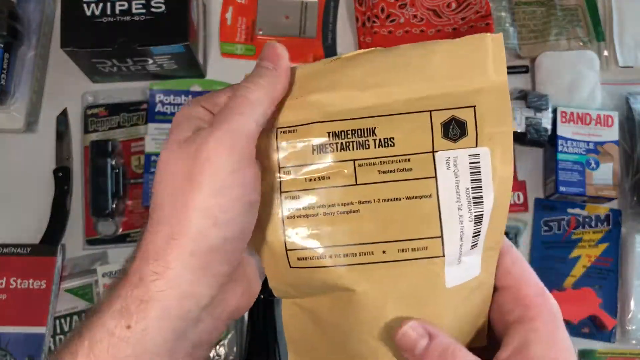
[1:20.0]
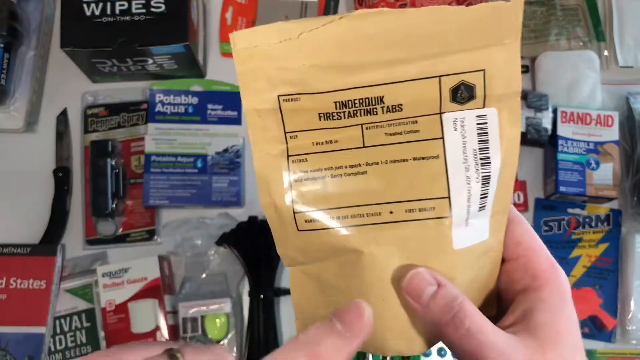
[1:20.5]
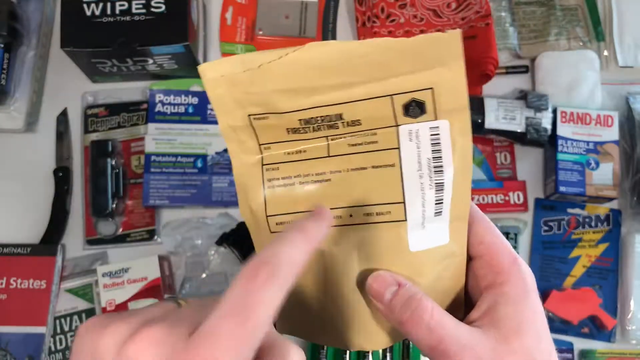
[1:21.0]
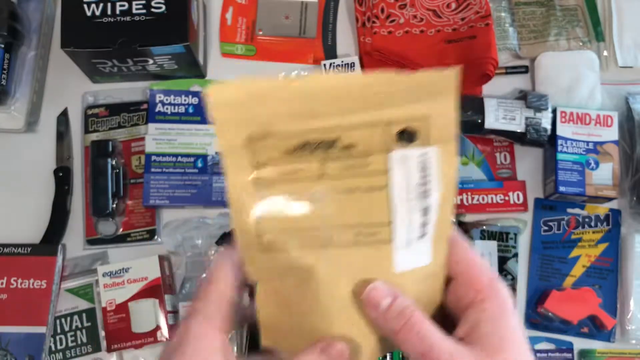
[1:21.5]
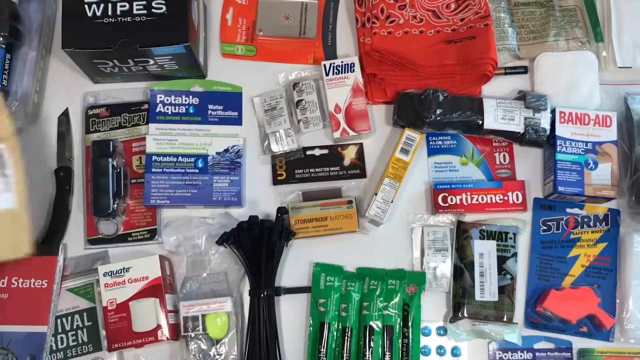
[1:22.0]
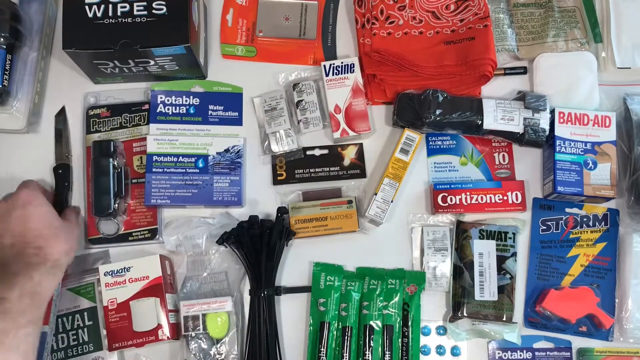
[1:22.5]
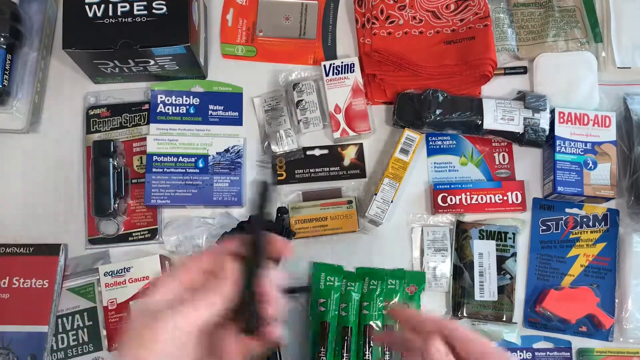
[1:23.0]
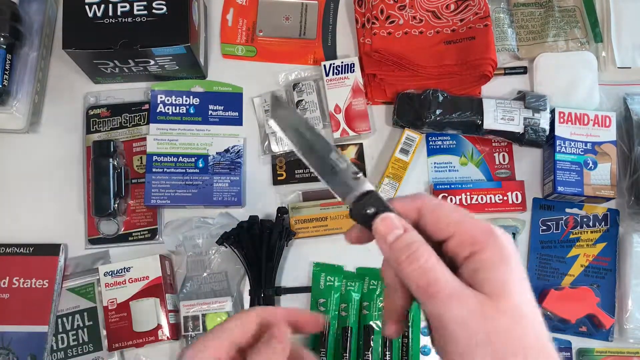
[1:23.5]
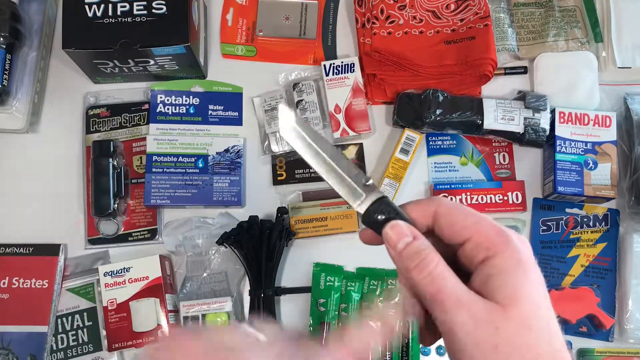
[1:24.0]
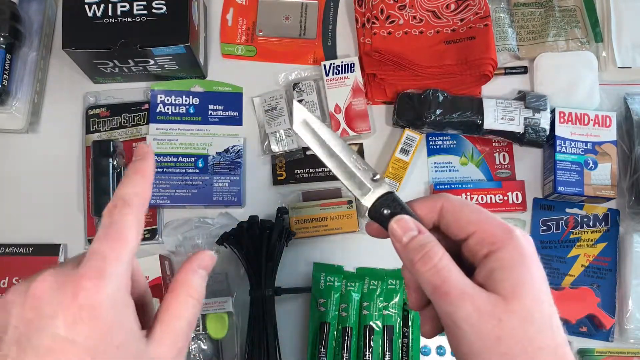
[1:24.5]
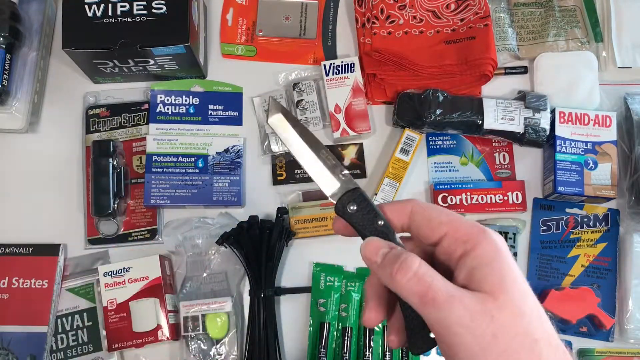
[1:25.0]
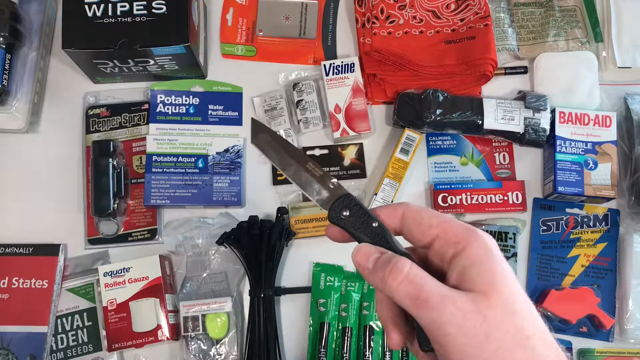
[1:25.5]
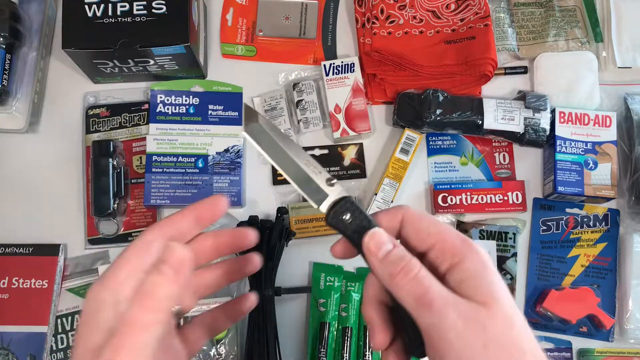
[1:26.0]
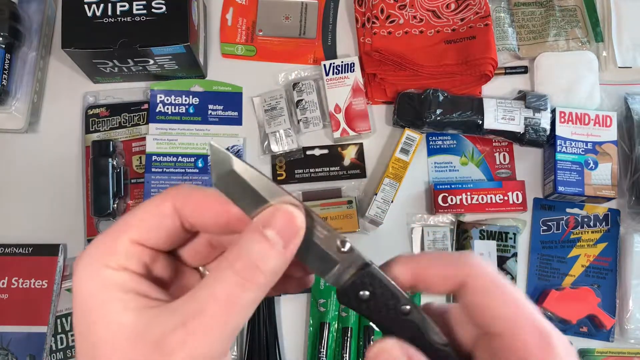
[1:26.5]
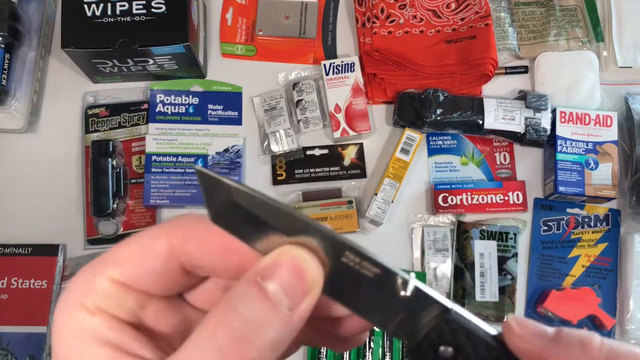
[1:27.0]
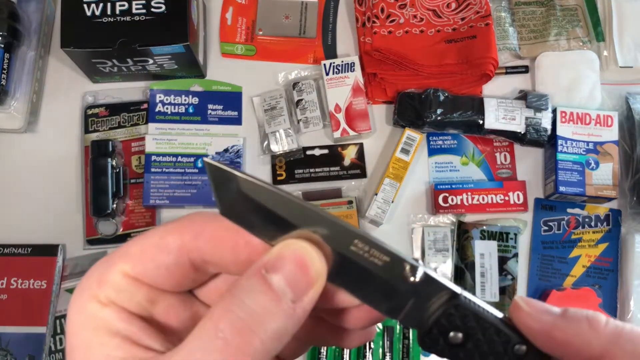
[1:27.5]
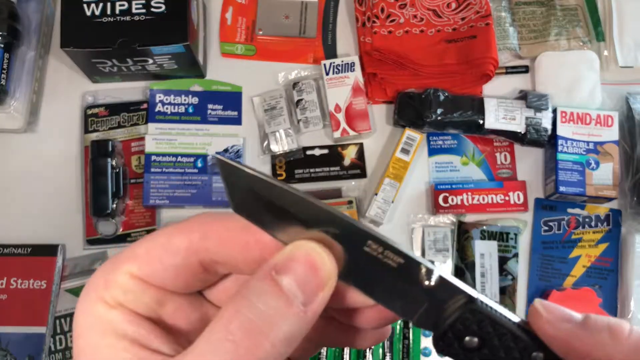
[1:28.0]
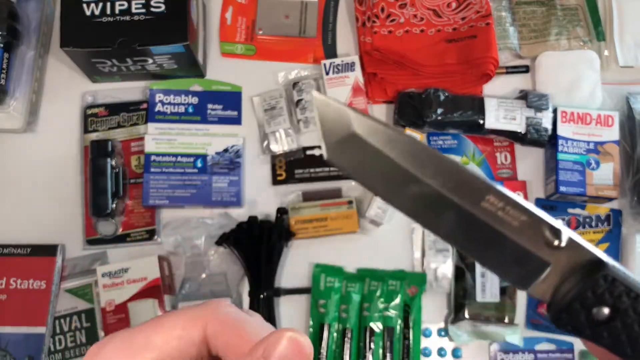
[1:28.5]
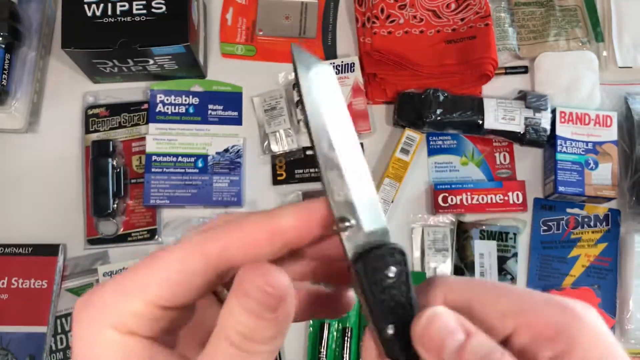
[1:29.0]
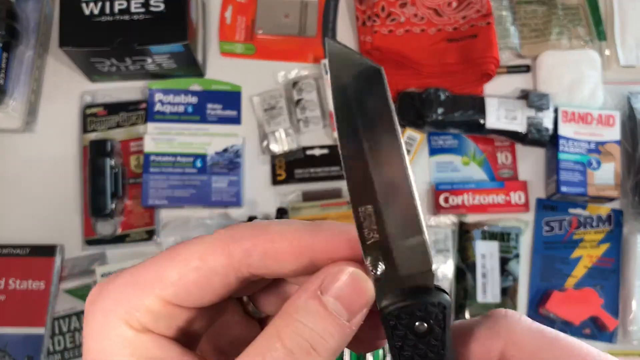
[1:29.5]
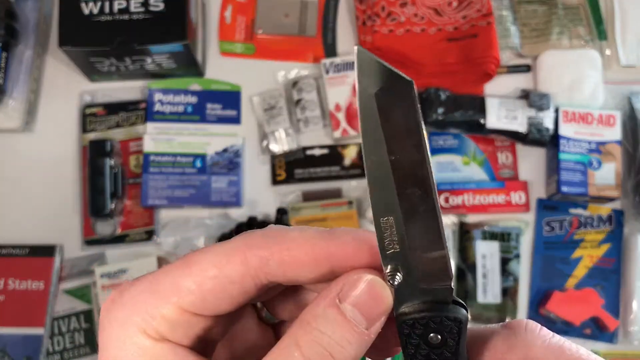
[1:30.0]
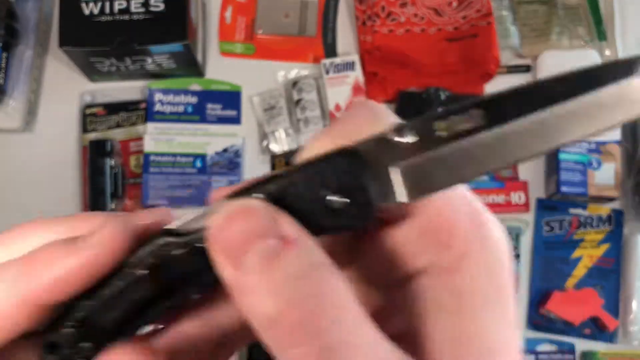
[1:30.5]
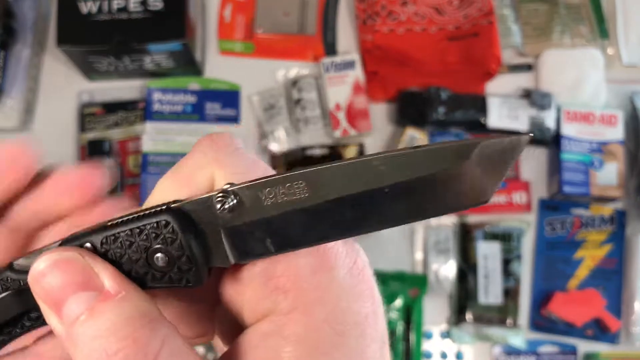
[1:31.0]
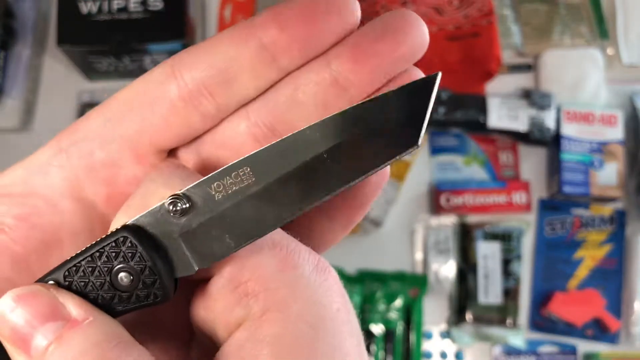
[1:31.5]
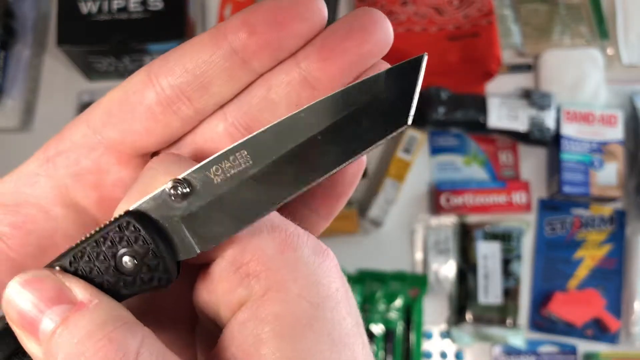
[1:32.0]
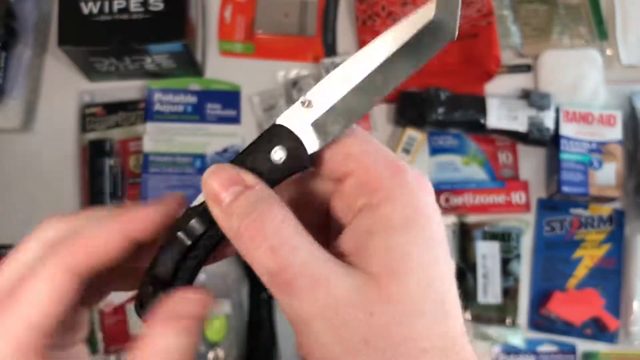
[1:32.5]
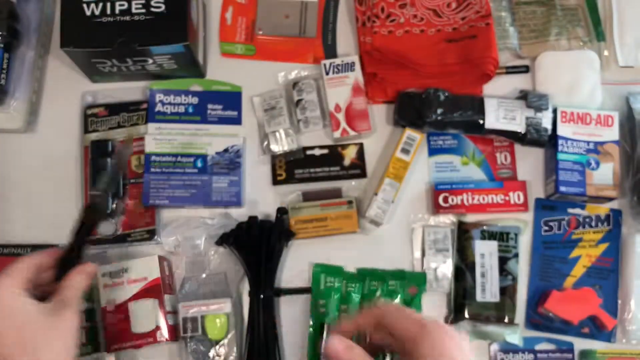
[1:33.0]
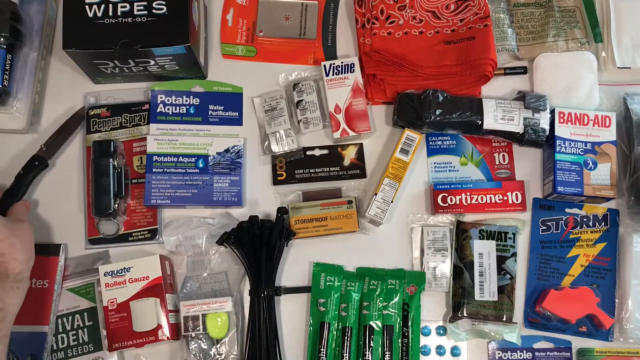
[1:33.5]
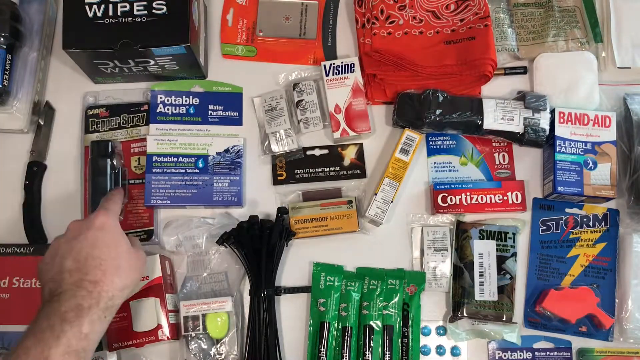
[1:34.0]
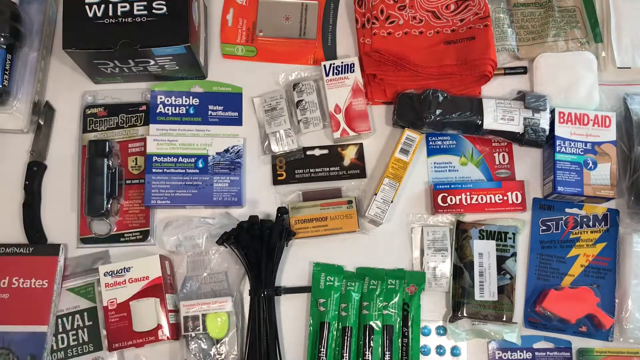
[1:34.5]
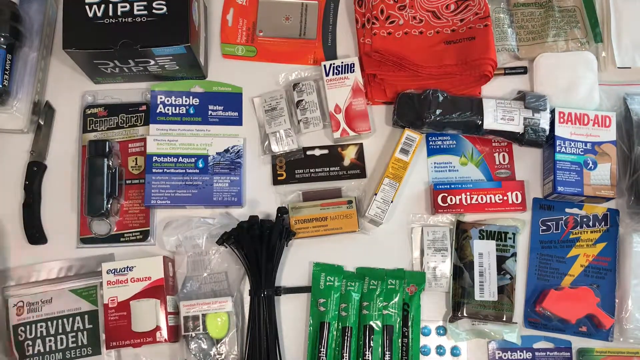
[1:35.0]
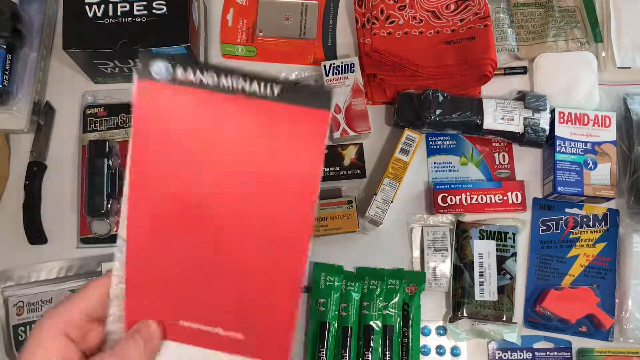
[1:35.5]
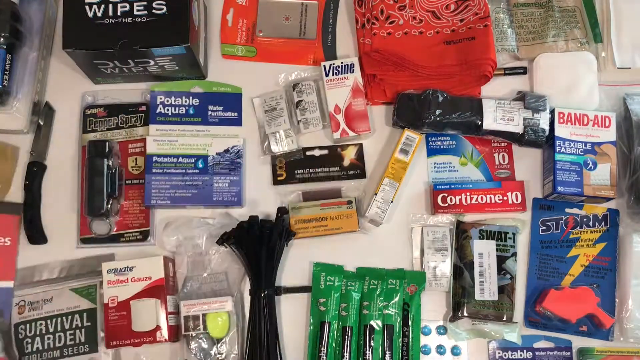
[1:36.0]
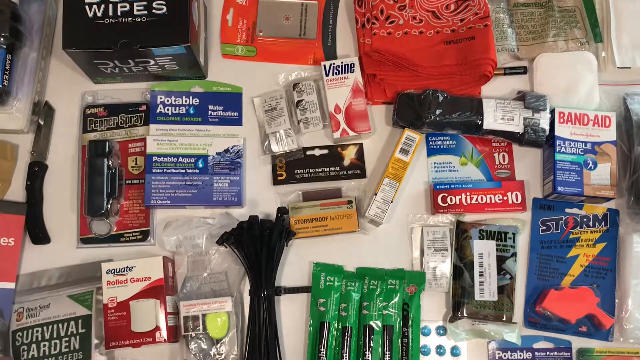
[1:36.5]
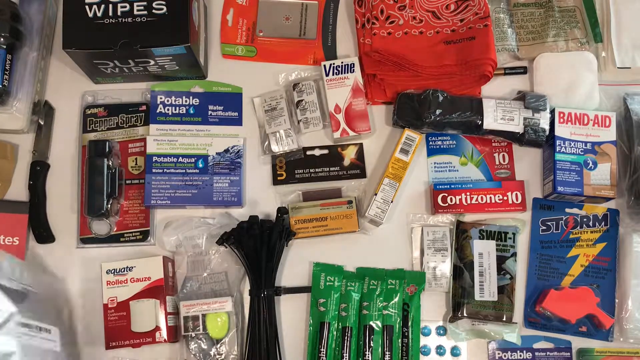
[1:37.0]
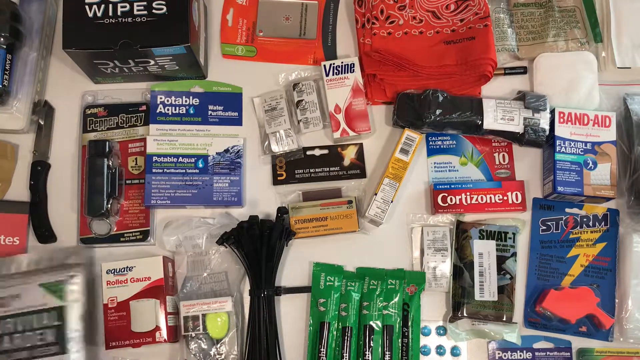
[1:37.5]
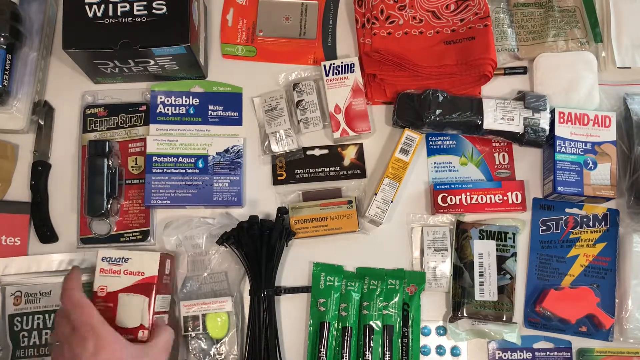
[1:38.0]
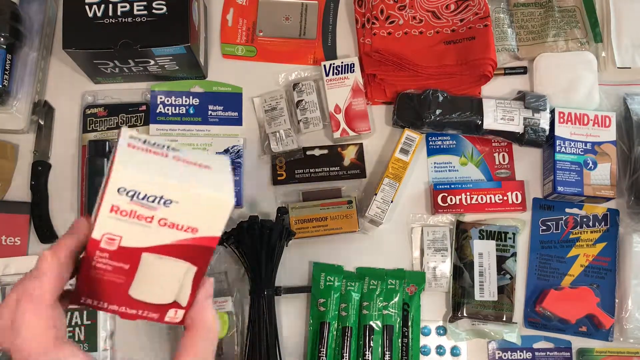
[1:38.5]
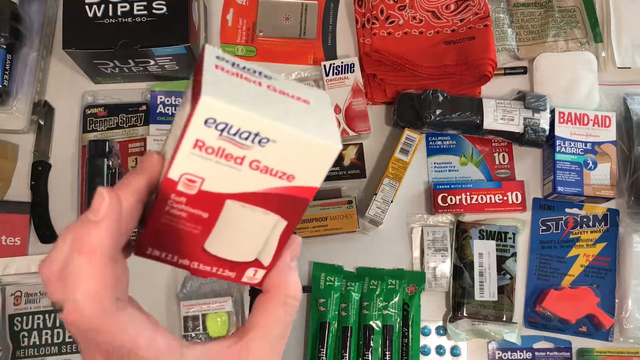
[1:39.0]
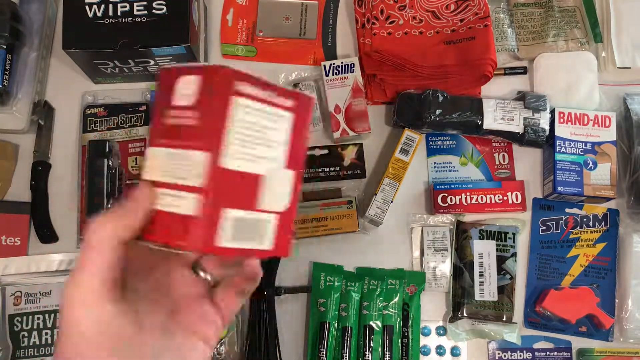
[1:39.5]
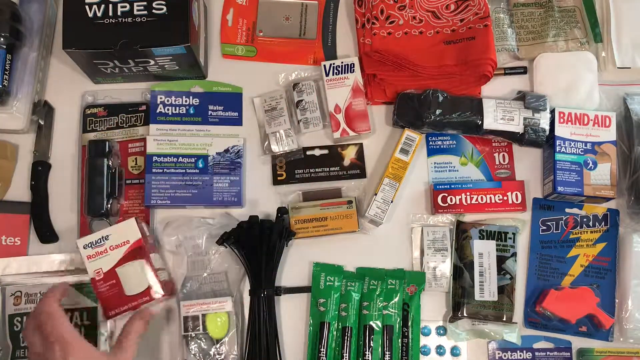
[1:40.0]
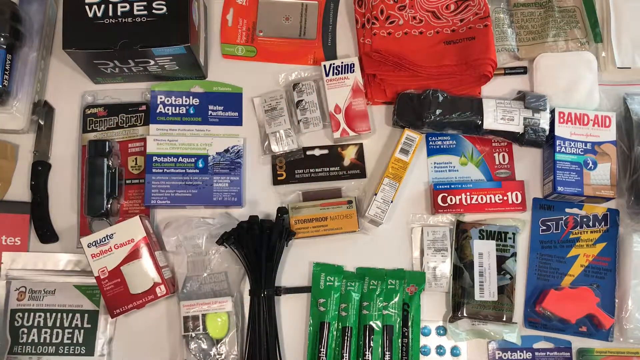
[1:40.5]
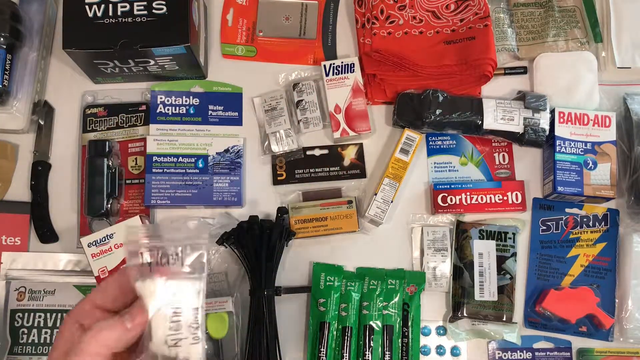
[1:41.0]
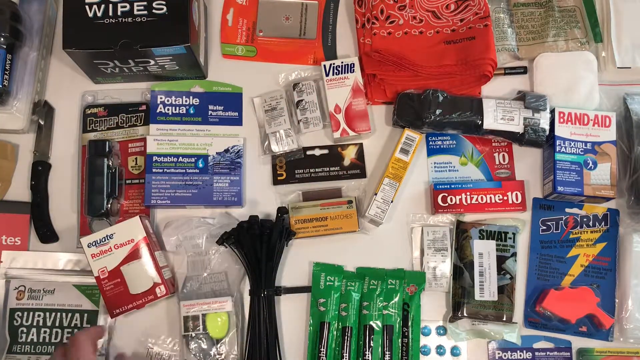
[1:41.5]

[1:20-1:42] Caucasian hands hold the packaging of a fire starting tabs product, showing the back of the packaging, which has a barcode stamped on it. Behind the fire starter tabs, other health care products lie on a white table. The hands then pick up a knife and show a close-up of it in the center of the screen, turning it around to give several different views of the knife. A hand briefly picks up the Rand McNally map of the United States. Other products include Equate rolled gauze. The shot ends with the various products lying on the table, including wipes, potable aqua, cortisone 10, Storm, Band-Aid flexible fabric bandages, what appears to be a pair of latex gloves, and a red bandana in the top right corner.